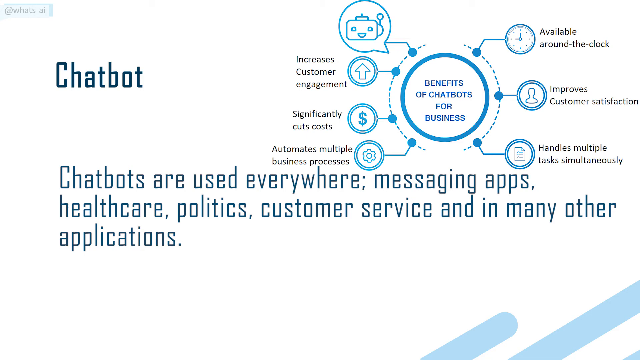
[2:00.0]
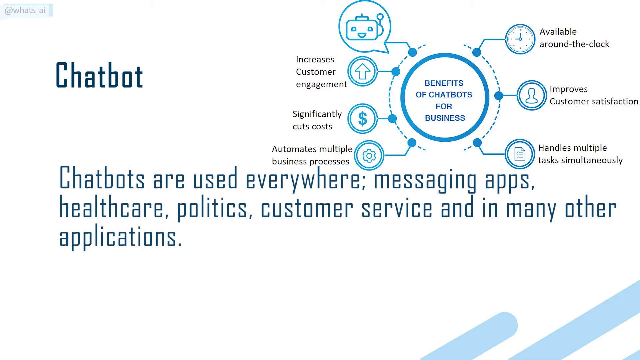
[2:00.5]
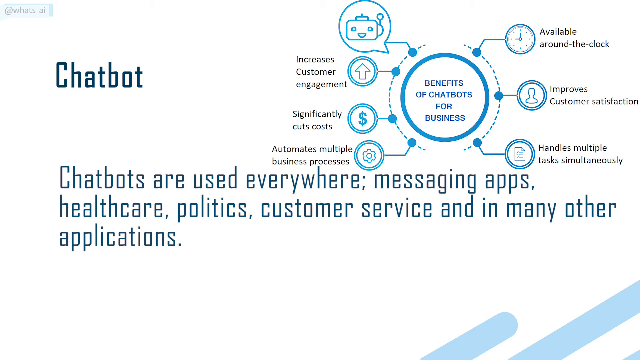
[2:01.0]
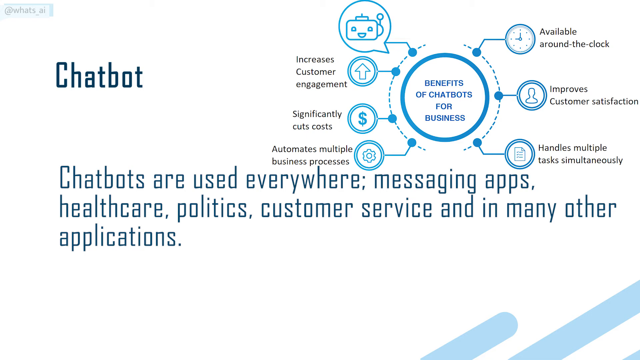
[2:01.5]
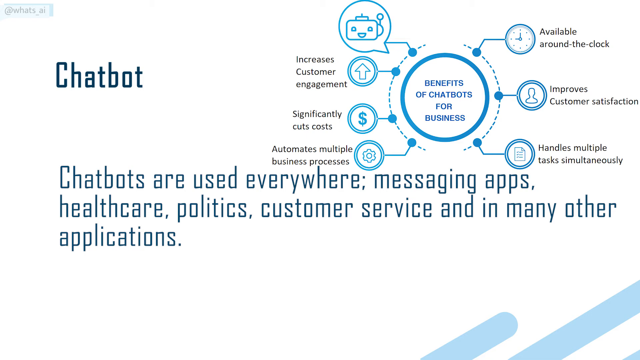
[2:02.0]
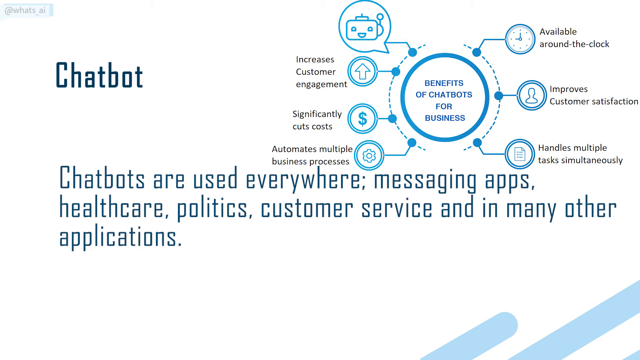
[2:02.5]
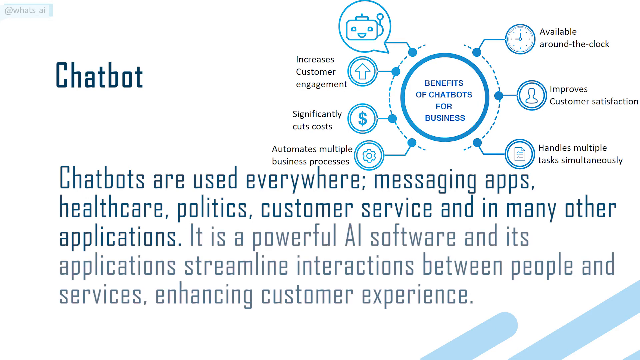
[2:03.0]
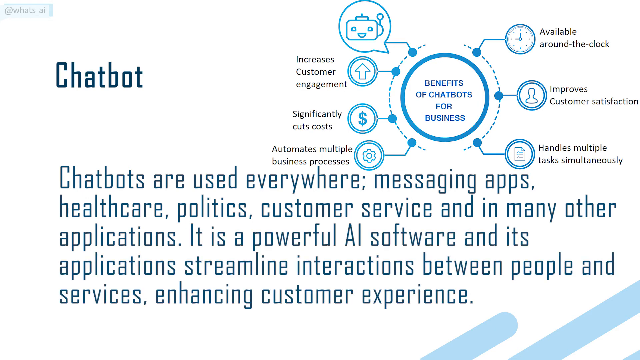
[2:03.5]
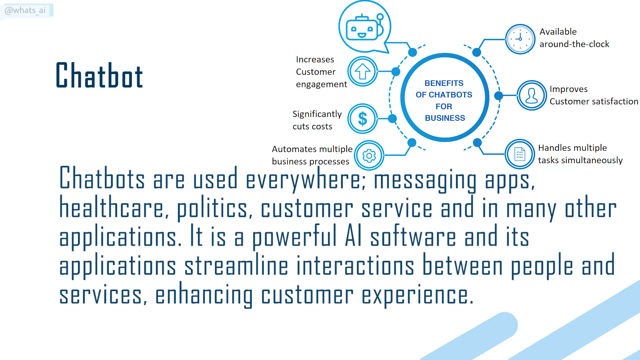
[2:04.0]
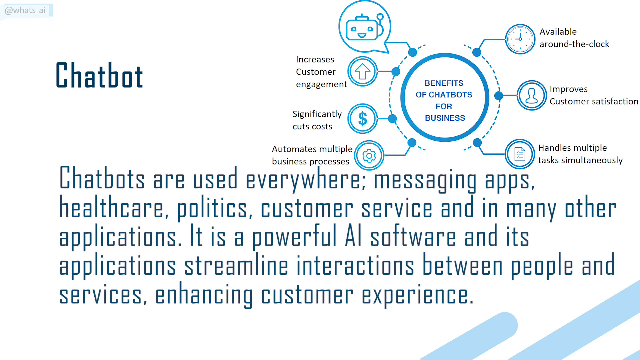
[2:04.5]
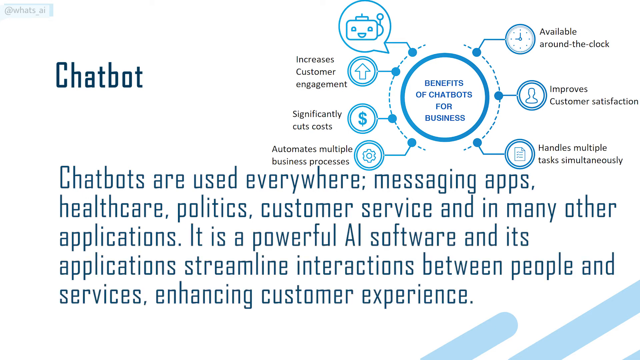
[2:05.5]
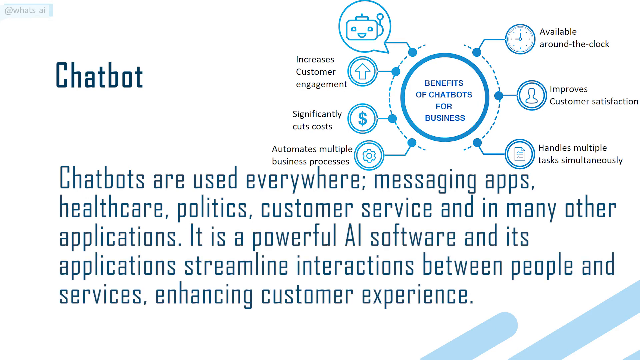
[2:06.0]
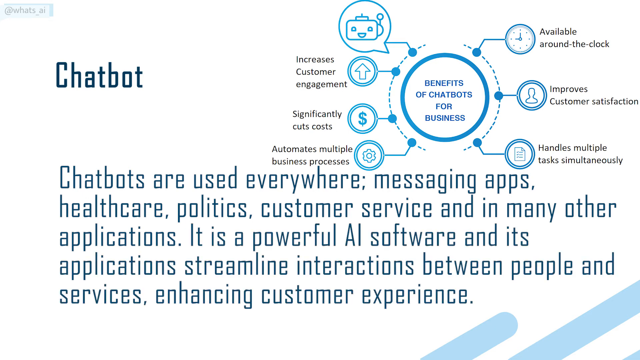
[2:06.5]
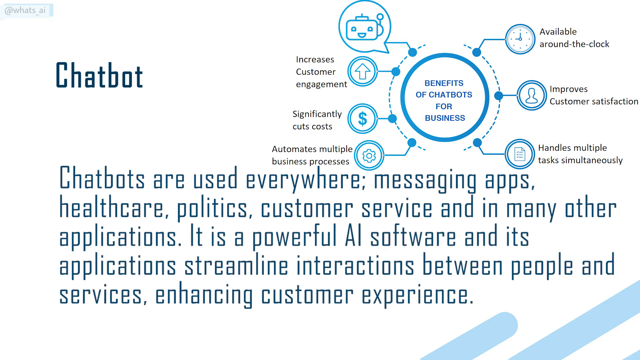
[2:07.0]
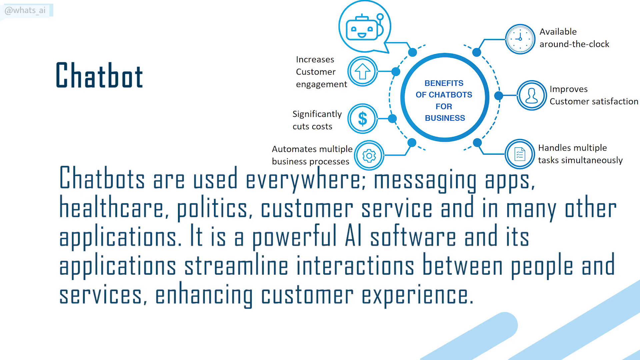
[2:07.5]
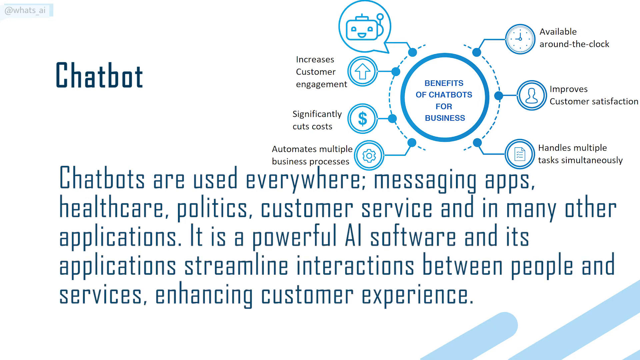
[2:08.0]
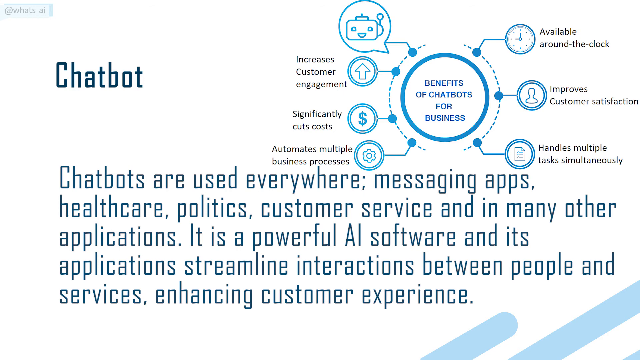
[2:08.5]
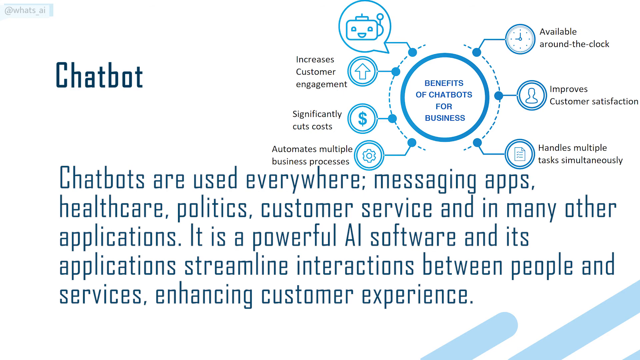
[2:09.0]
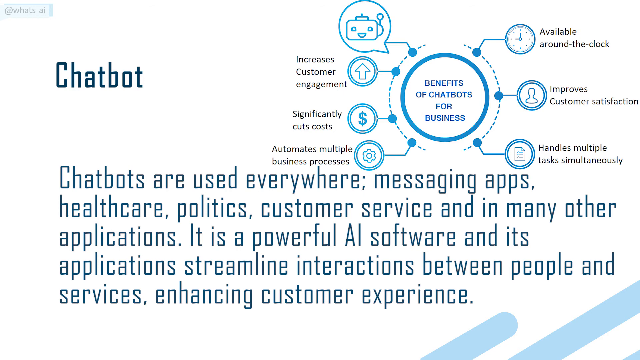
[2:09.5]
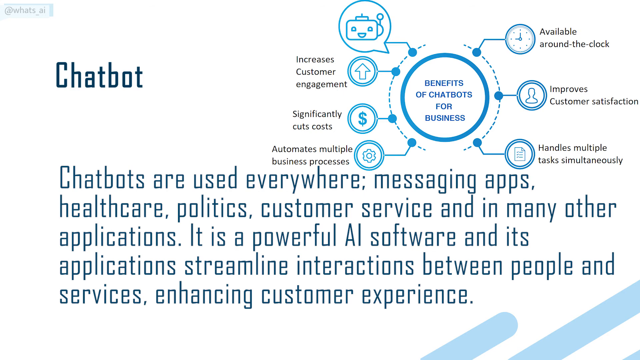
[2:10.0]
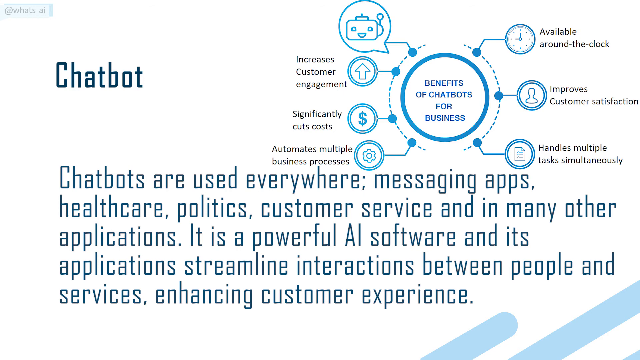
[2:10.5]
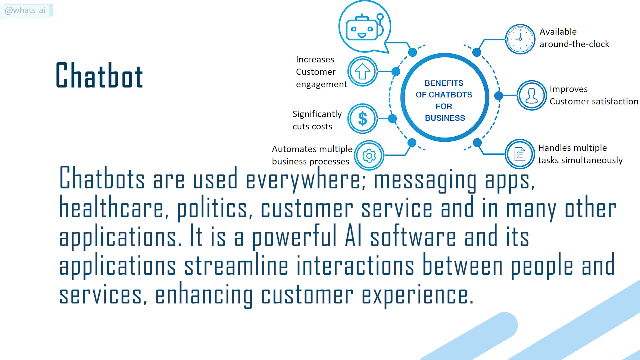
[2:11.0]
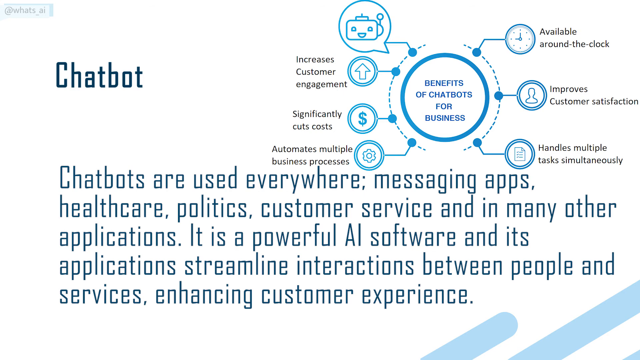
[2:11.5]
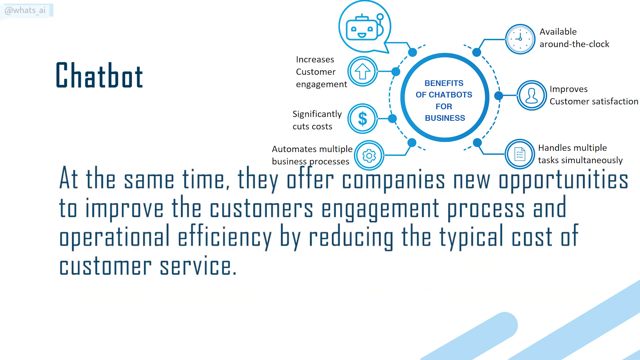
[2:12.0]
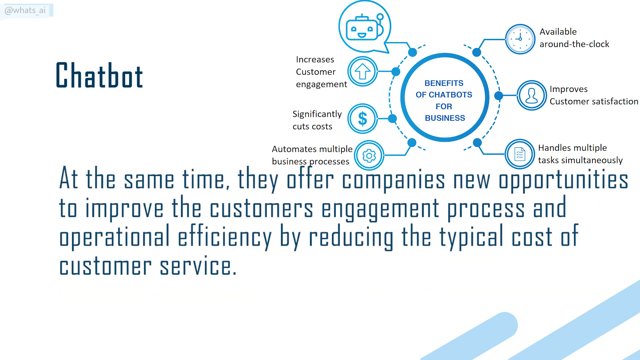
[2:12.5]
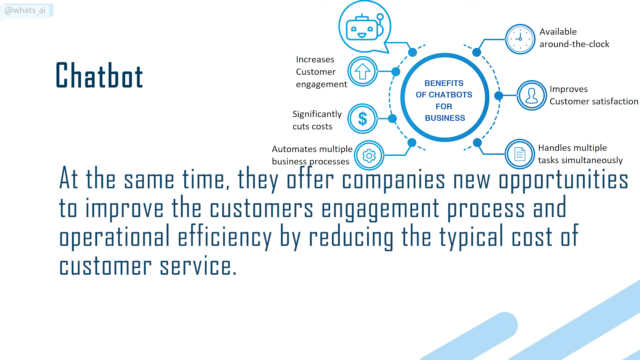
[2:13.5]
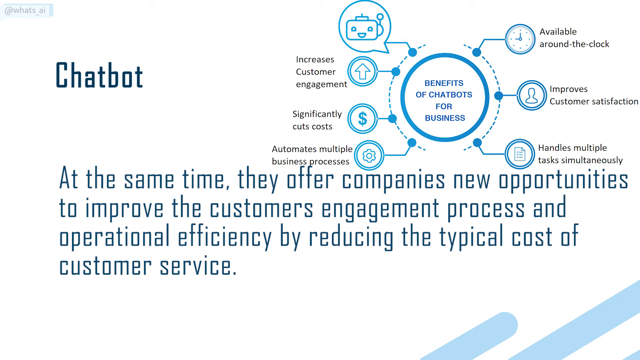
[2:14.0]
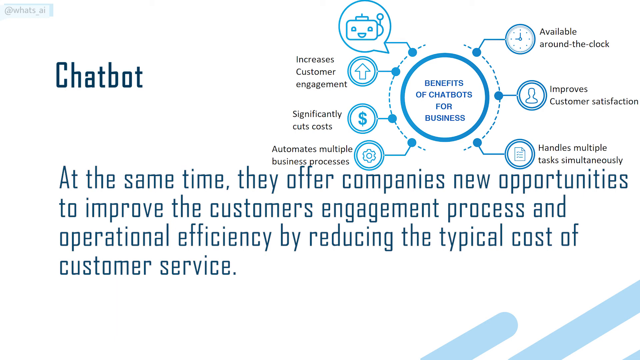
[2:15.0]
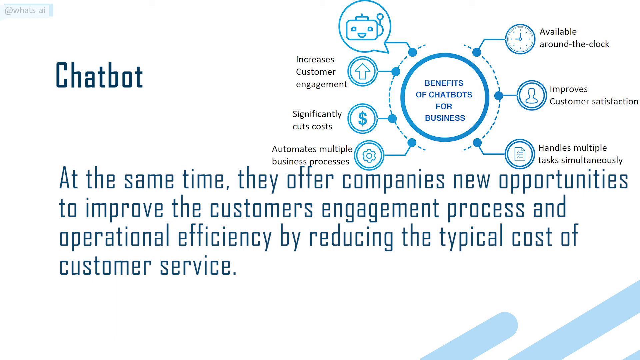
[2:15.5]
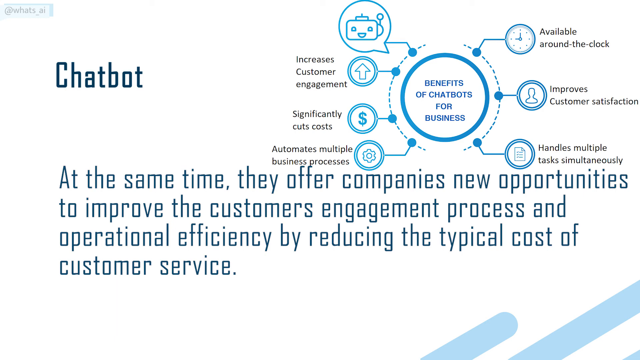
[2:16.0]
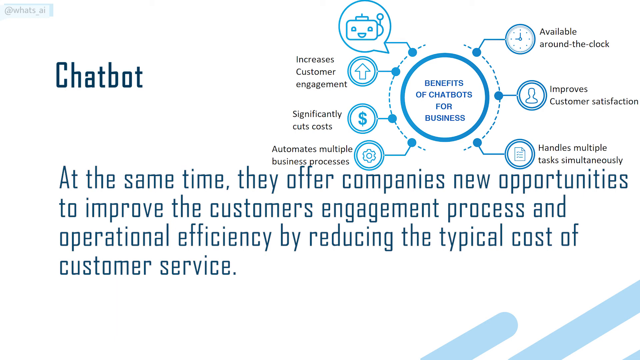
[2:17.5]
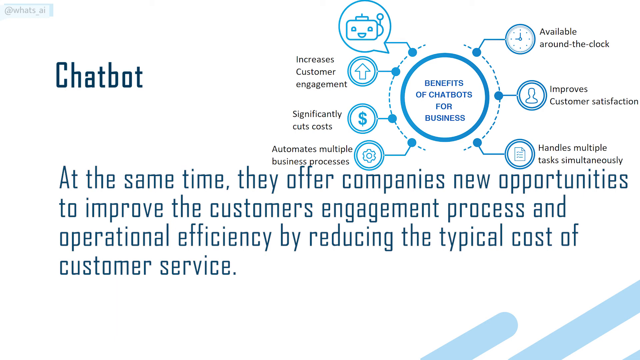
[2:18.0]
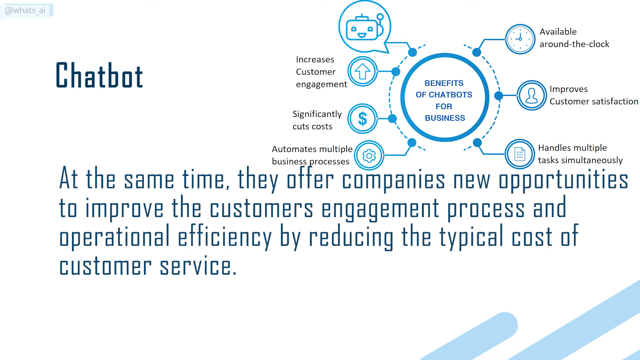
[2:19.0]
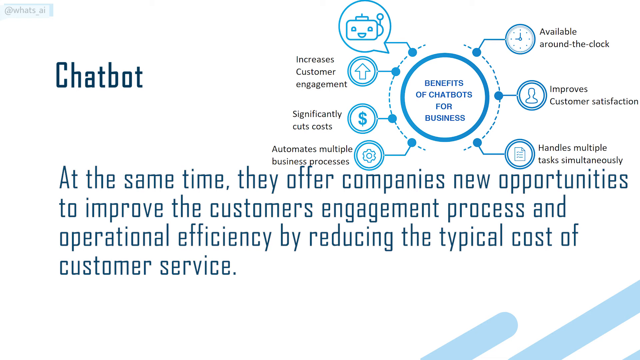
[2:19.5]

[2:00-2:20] Text about chatbots and where they are used says "it is a powerful AI software and its applications streamline interactions between people and services, enhancing customer experience." The words at the bottom change to "at the same time, they offer companies new opportunities to improve the customer's engagement process and operational efficiency by reducing the typical cost of customer service." The words change again, reading "chatbots are used everywhere, messaging apps, healthcare, politics, customer service, and in many other applications."